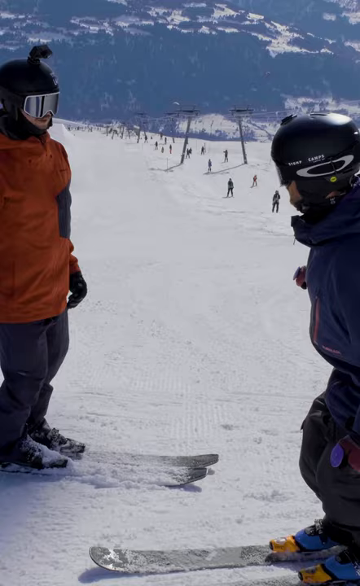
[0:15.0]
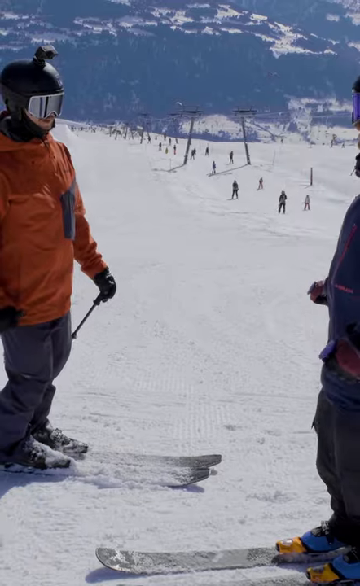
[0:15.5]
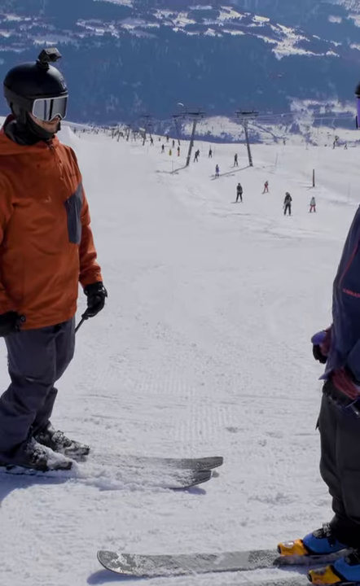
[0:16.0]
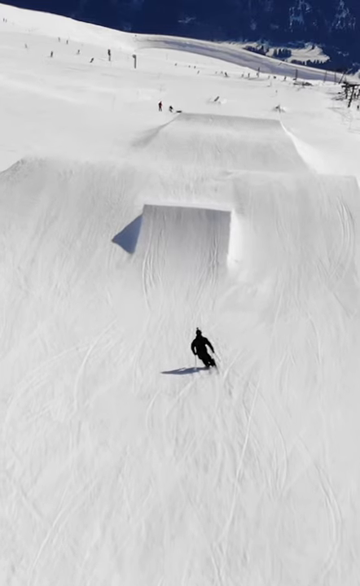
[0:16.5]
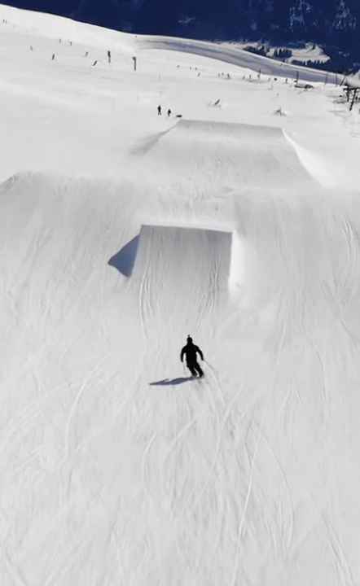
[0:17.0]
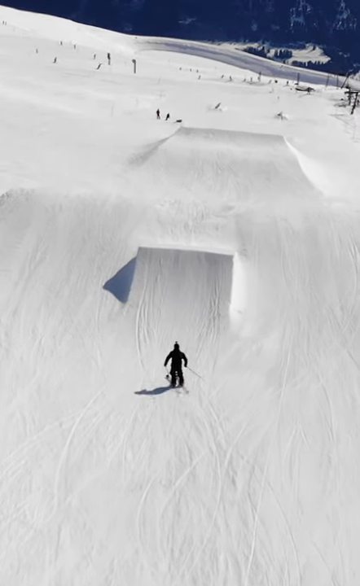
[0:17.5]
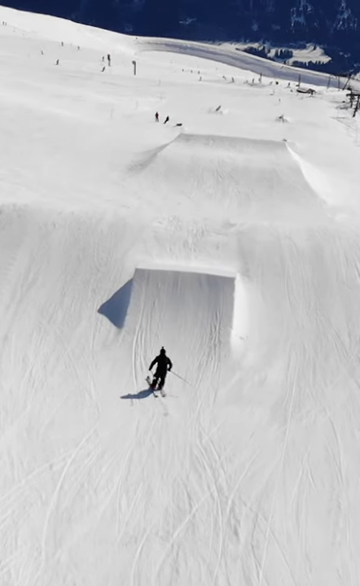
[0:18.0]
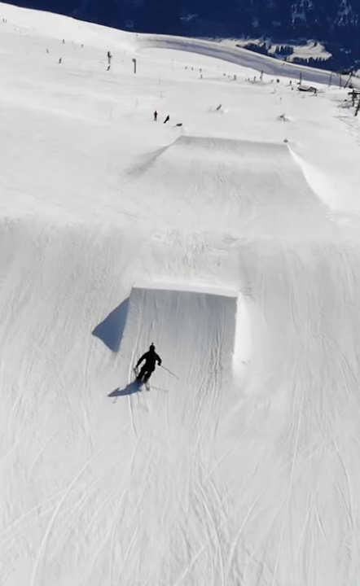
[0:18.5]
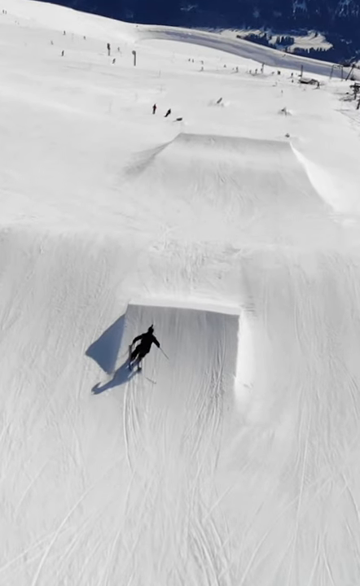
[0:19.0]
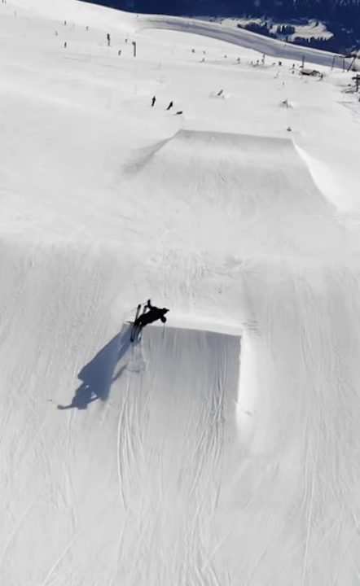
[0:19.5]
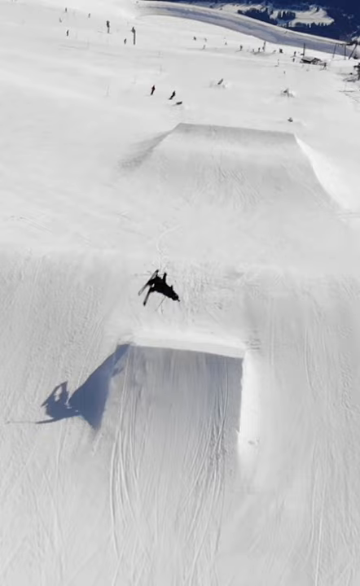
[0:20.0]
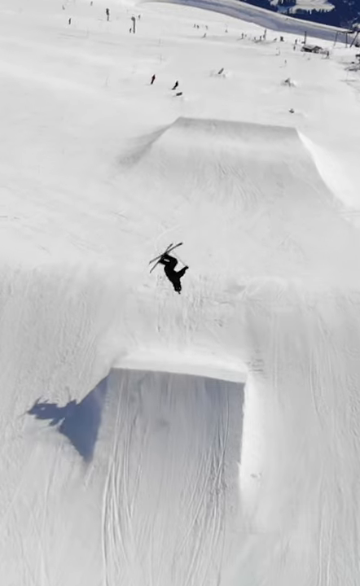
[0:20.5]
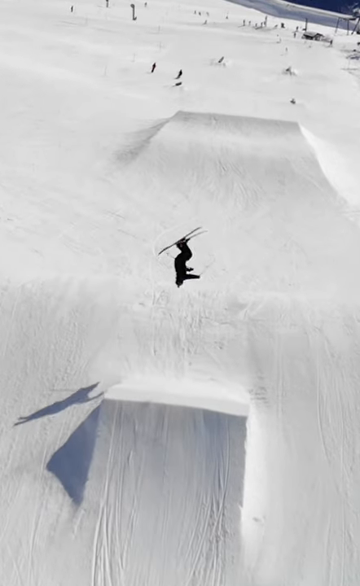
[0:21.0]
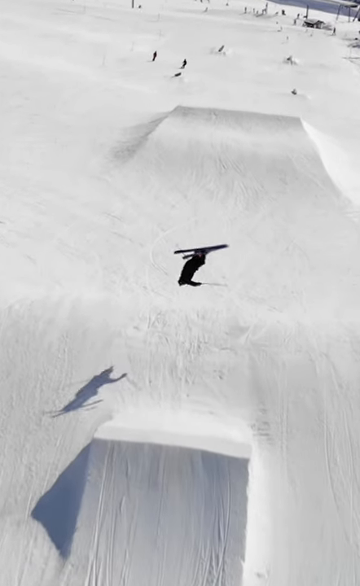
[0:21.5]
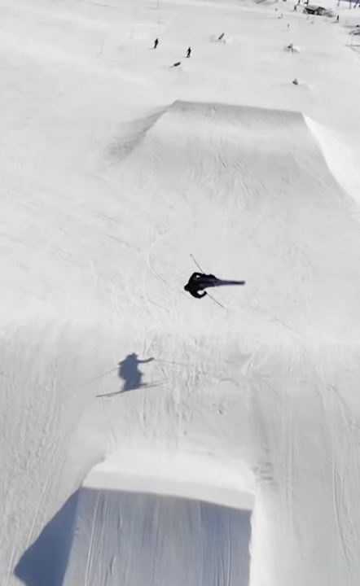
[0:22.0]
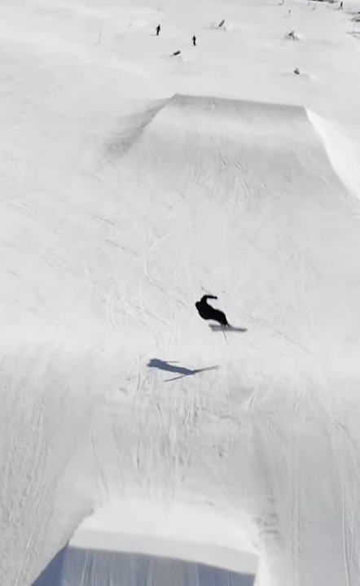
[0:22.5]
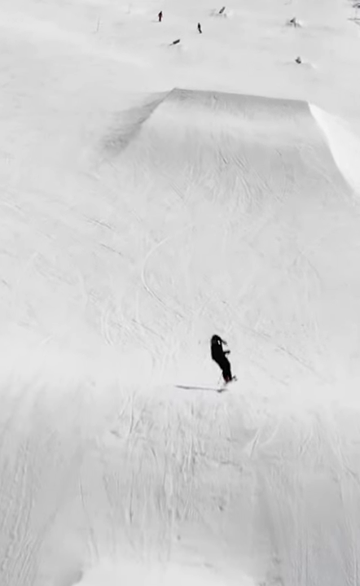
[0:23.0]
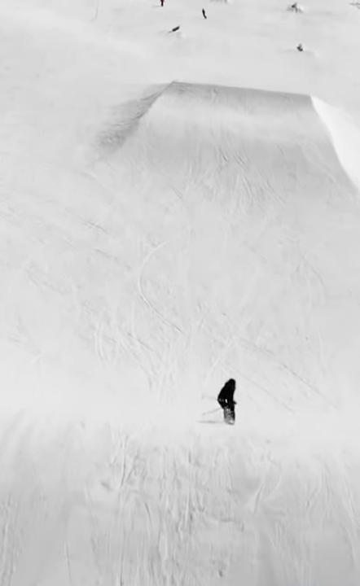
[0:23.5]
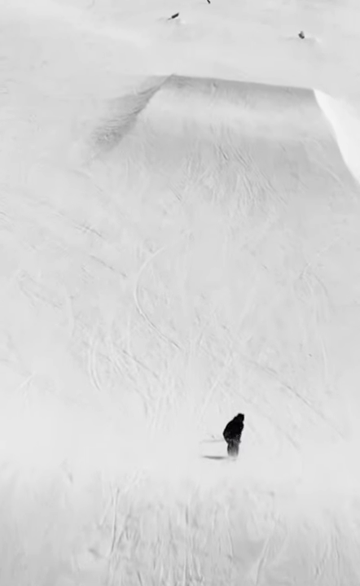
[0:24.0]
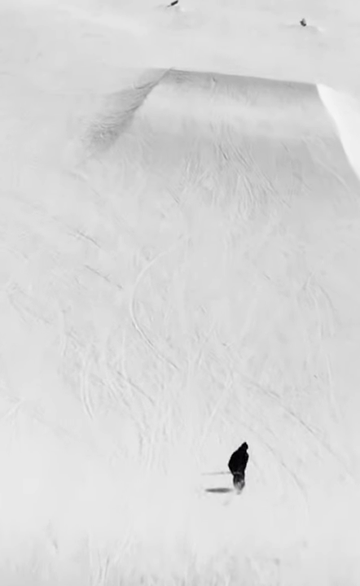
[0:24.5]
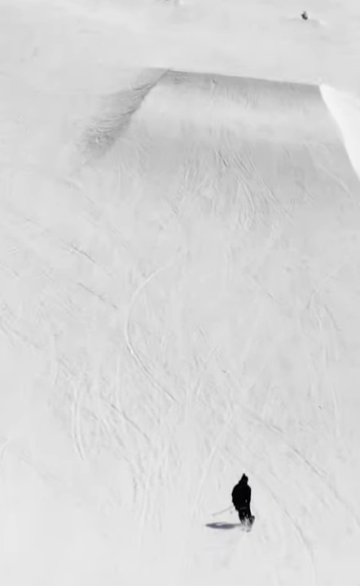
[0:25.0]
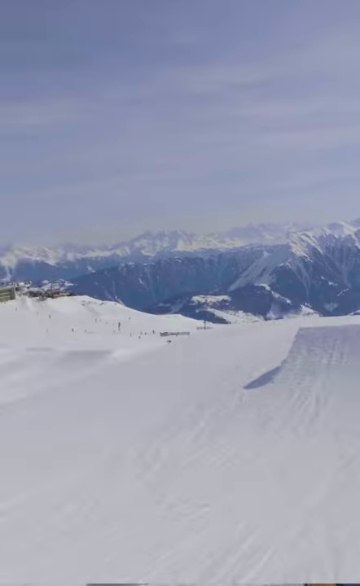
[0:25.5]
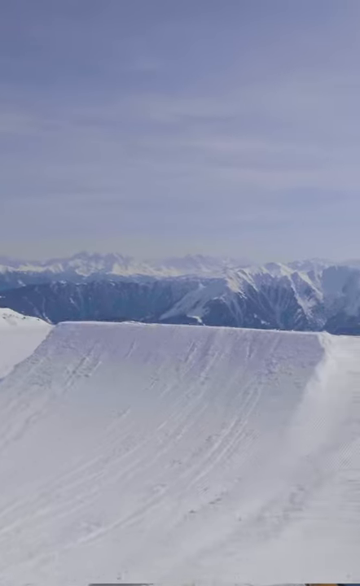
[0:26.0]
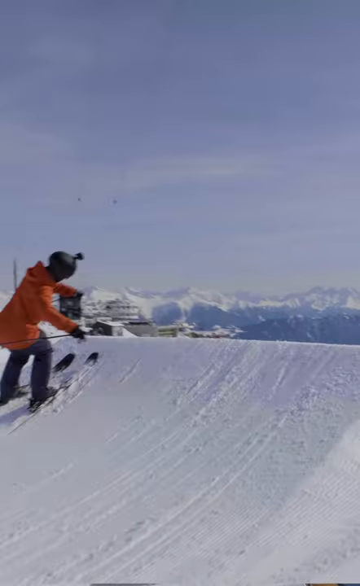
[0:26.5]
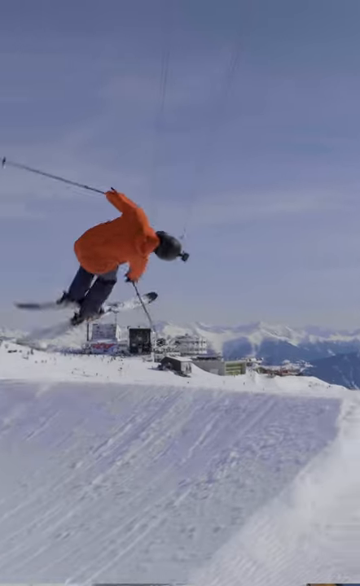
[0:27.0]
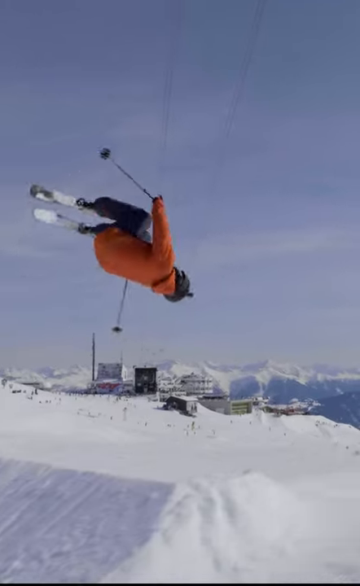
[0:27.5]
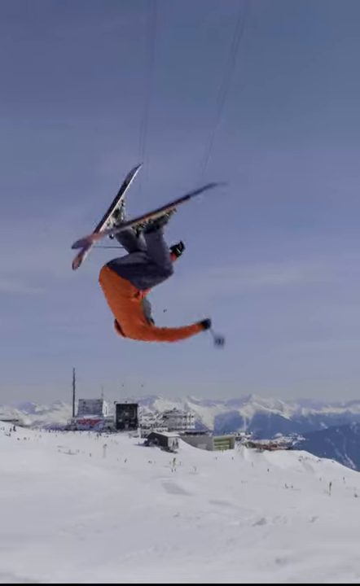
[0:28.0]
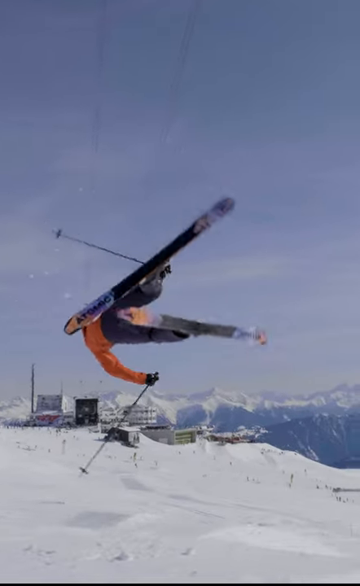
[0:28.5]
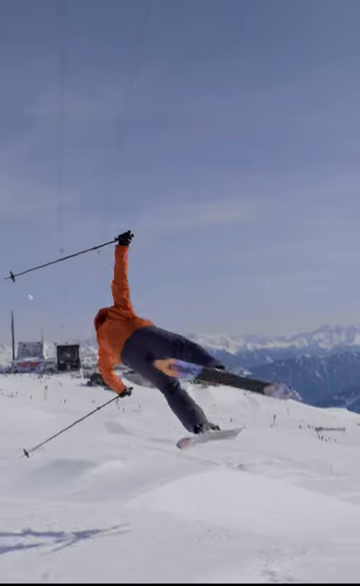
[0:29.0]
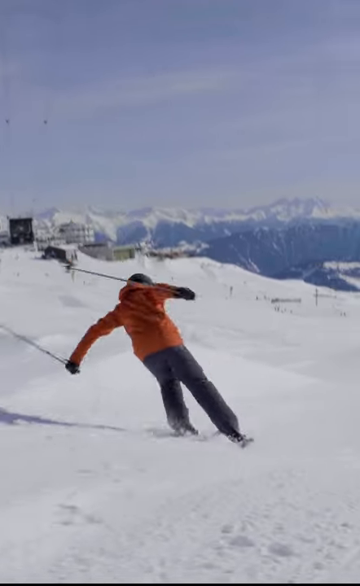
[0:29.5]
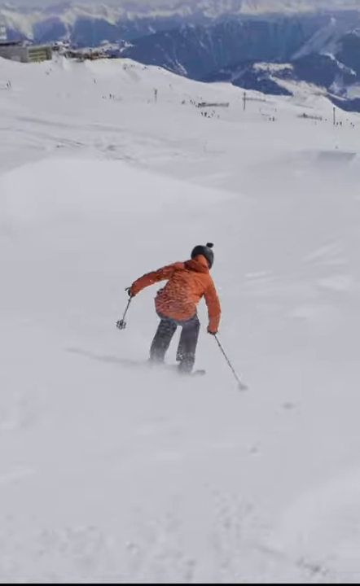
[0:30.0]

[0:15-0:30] Two skiers are talking on an obstacle course. Then the skier in the navy jacket is shown from an aerial view, from above, in slow motion, skiing down, propelling off the ramp and doing a sideways flip. He gets pretty high in the air and lands on the downward slope of the hill. Next, the skier in the orange jacket is shown in a closer view from the side of the ramp, going up the ramp and also doing a sideways flip, which he lands. The video then returns to the two men talking. The first skier's side flip is much better than the second skier's.